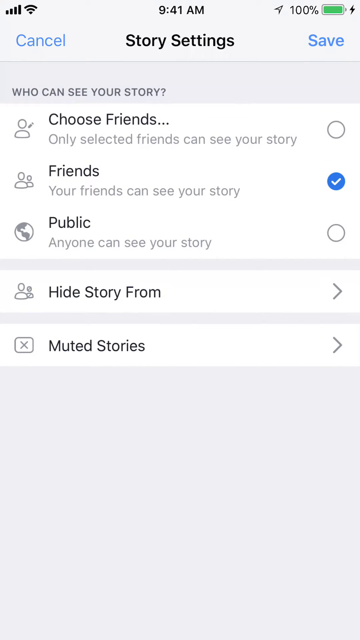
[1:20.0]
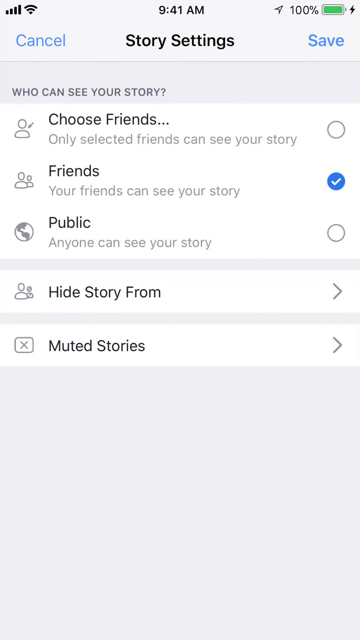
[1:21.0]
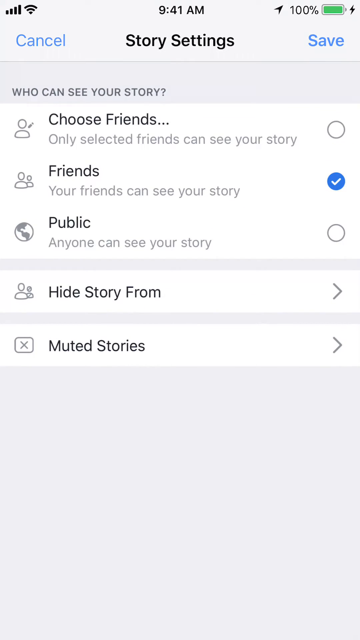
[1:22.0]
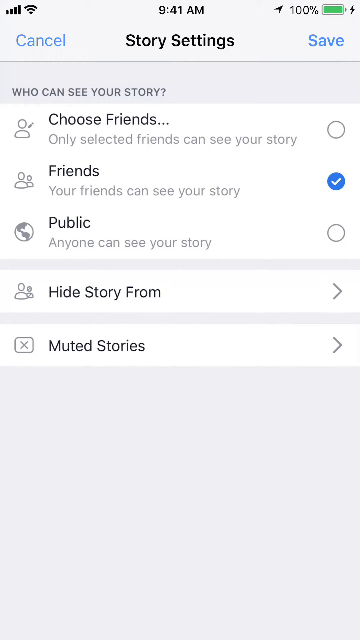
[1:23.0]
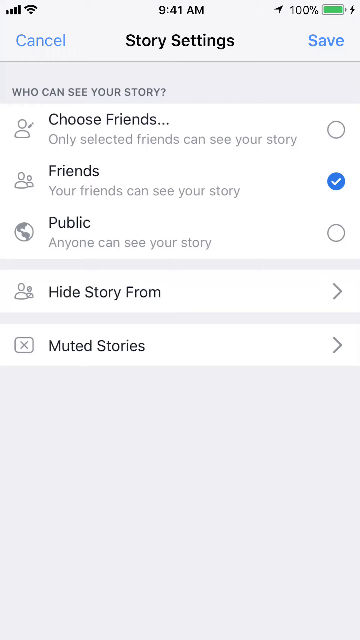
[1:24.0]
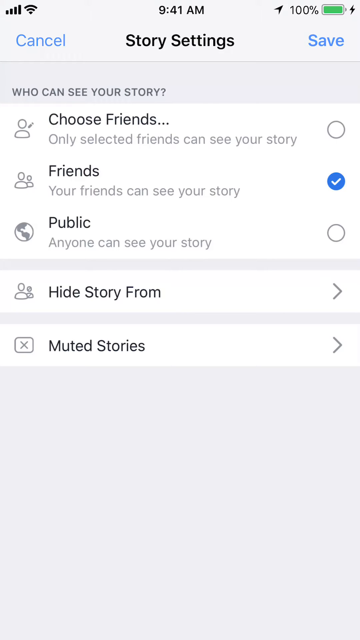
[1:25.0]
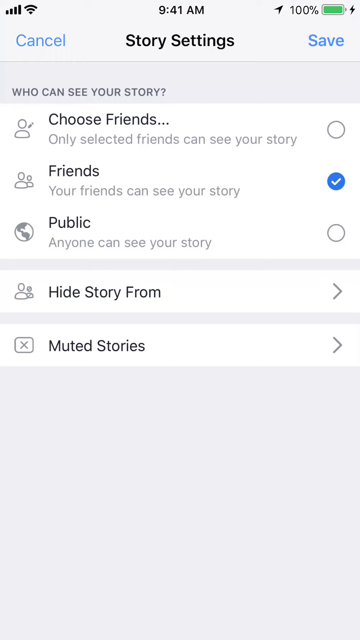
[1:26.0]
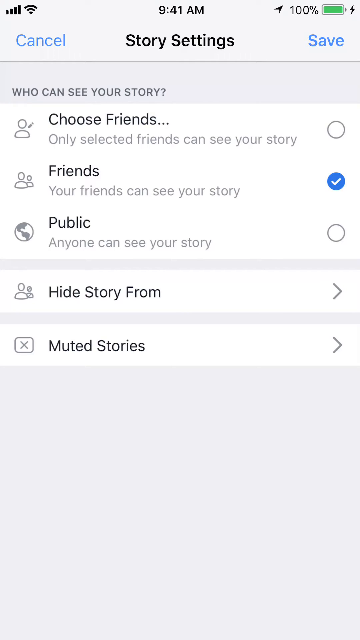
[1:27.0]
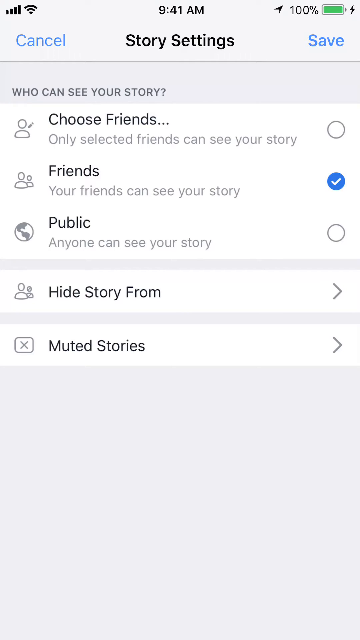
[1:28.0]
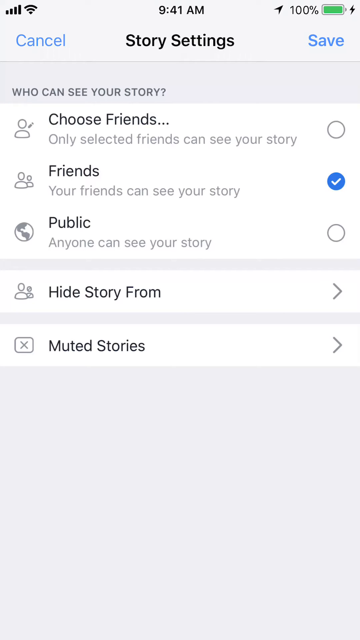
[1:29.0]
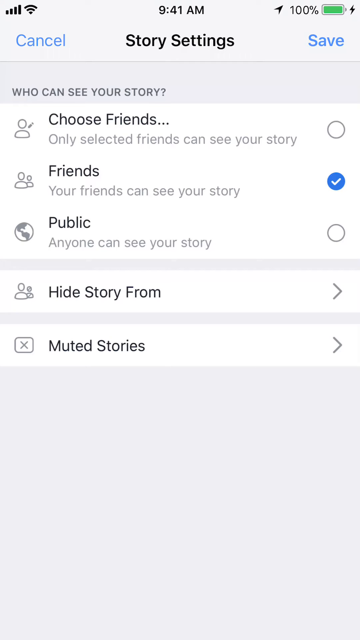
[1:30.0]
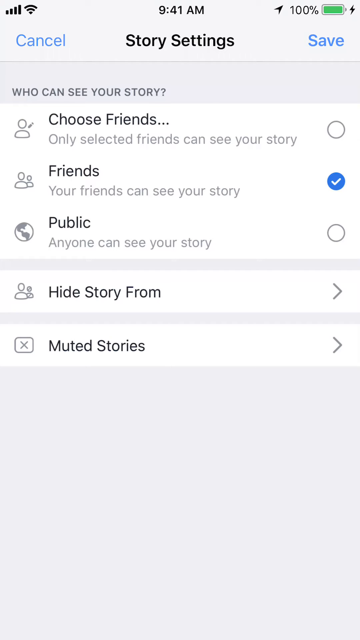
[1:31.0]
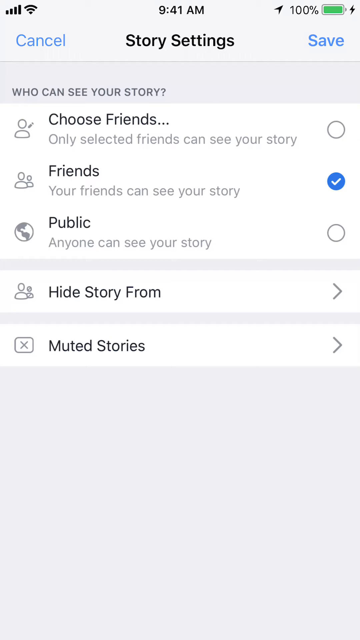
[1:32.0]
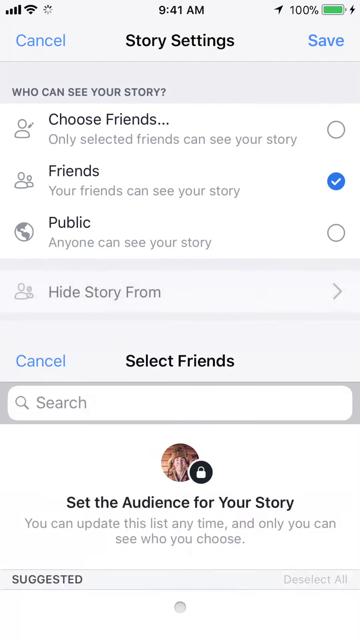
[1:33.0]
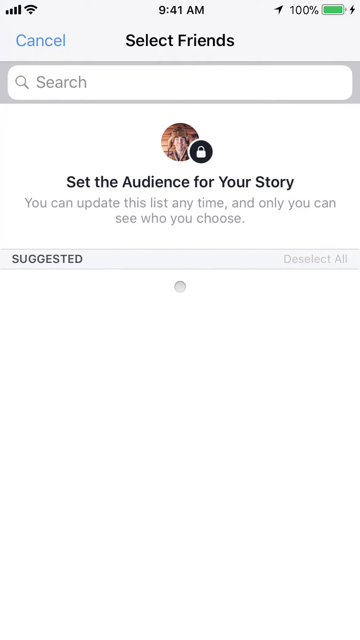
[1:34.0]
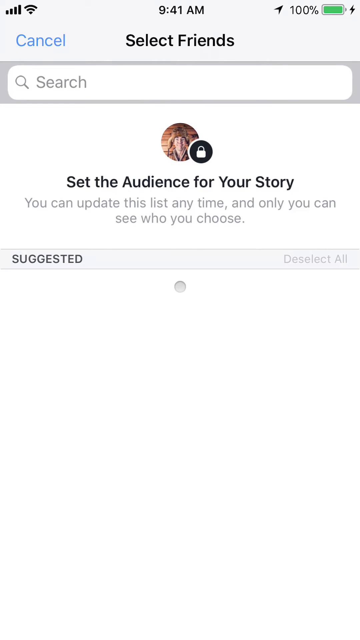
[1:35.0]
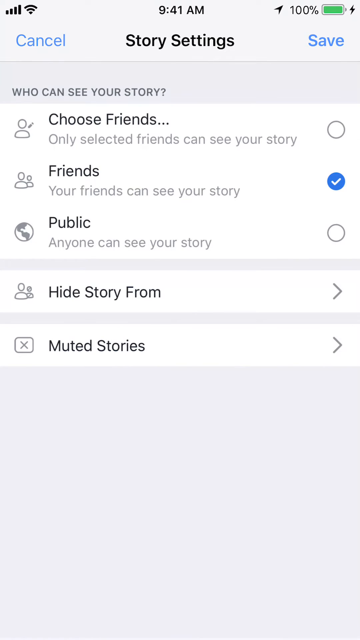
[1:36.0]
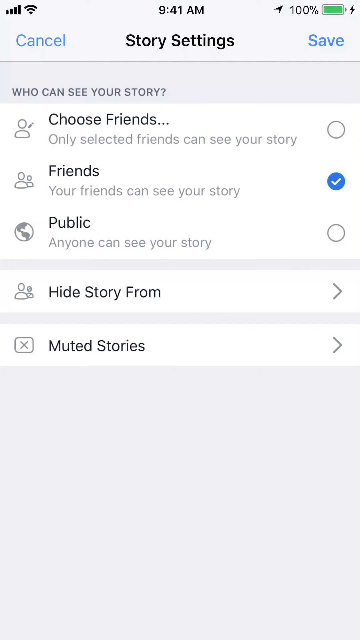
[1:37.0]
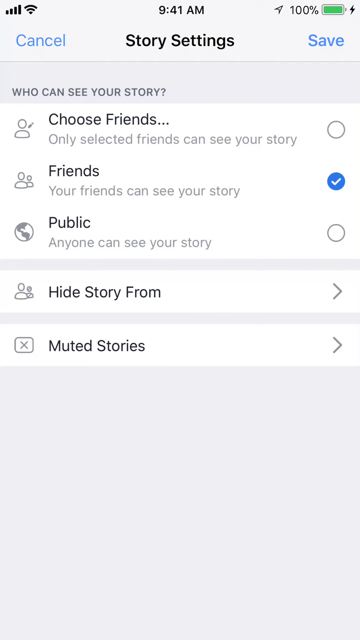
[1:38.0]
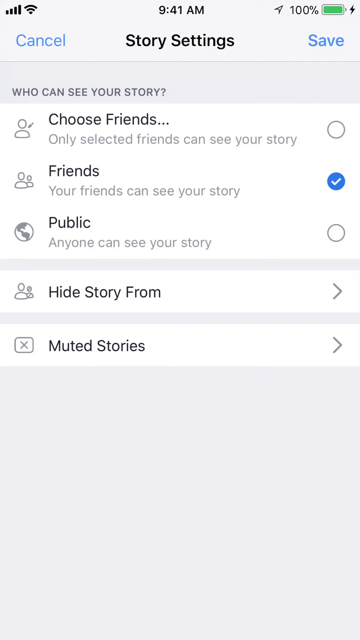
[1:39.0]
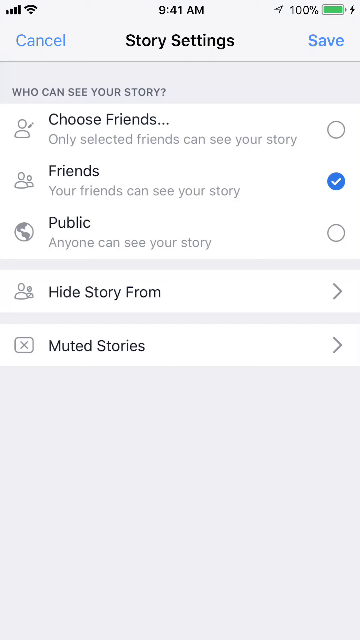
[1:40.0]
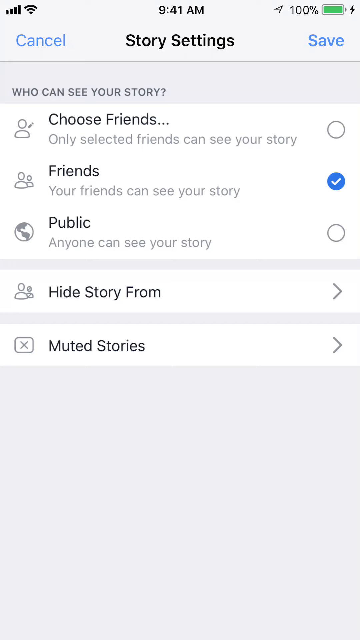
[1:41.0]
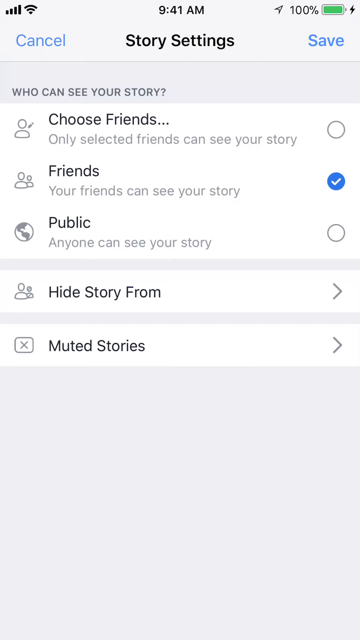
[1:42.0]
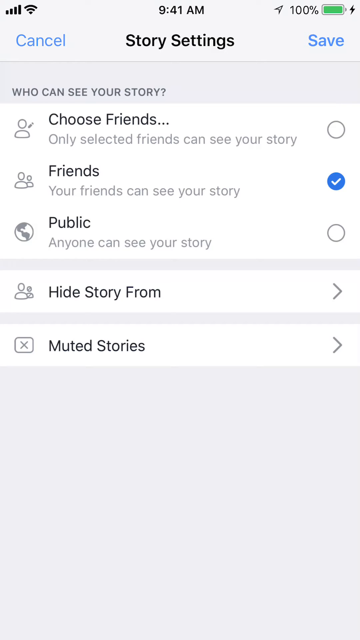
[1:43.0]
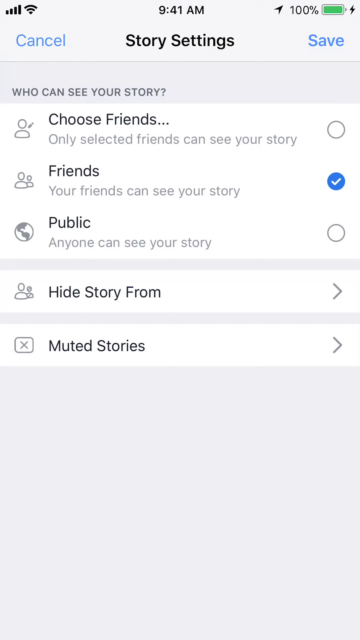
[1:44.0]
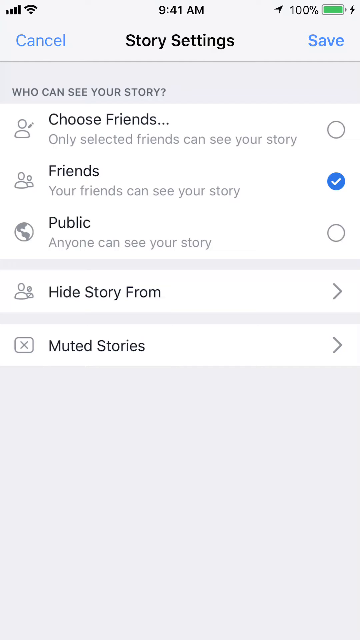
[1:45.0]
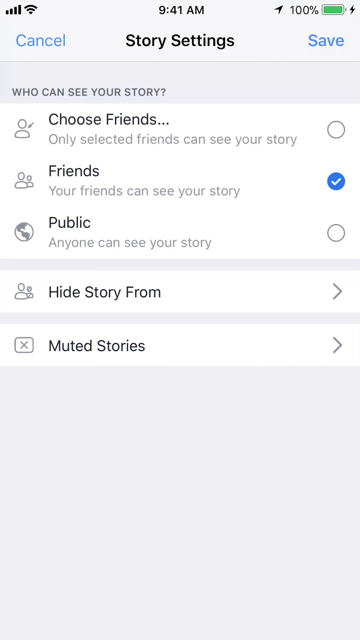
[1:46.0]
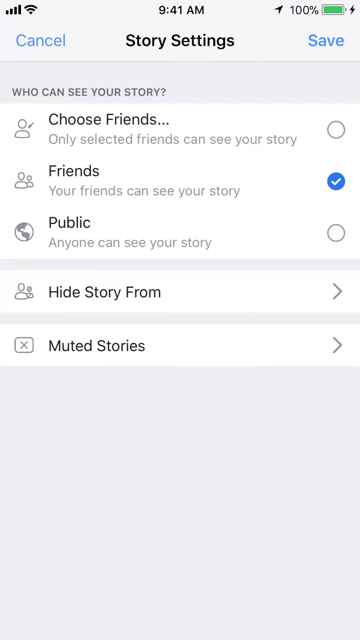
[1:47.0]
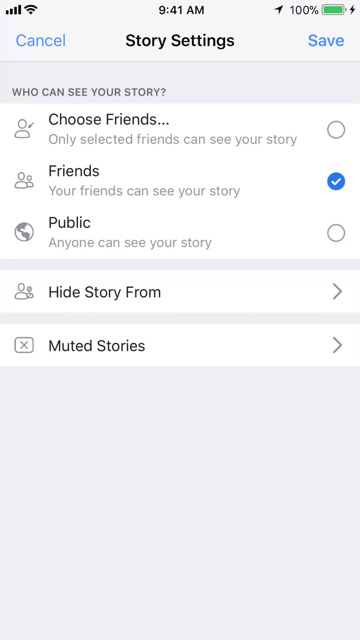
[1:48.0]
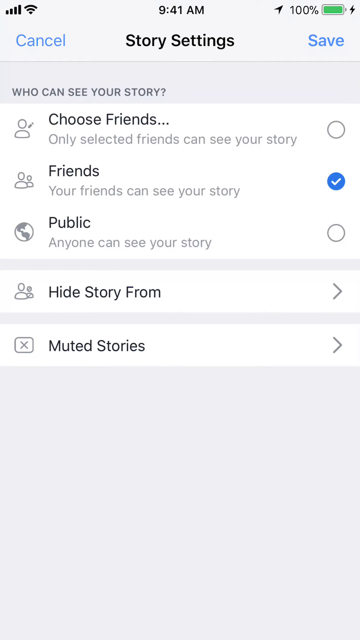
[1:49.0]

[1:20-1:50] The story settings screen is shown as the user decides who can see their story. At the top are "cancel", "story settings" and "save". A subheading reads "who can see your story". The options are "choose friends" ("only selected friends can see your story"), "friends" ("your friends can see your story"), "public" ("anyone can see your story"), "hide story from" with a drop-down menu, and "muted stories", which also has a drop-down menu. "Friends" is selected. The signal strength bars and Wi-Fi icon are in the upper left corner, the time at the top middle is 9:41 AM, and the battery icon in the upper right corner is green and filled, indicating 100 percent. Text also reads "set the audience for your story. You can update this list anytime and only you can see who you chose."